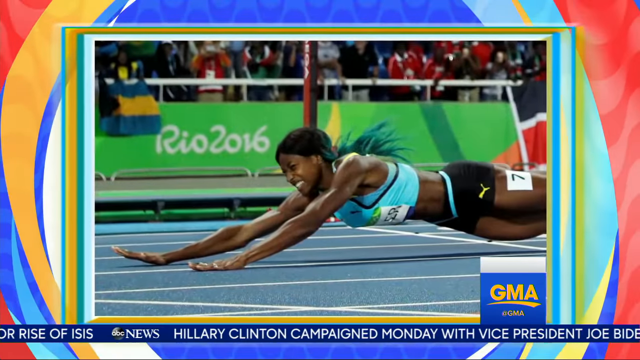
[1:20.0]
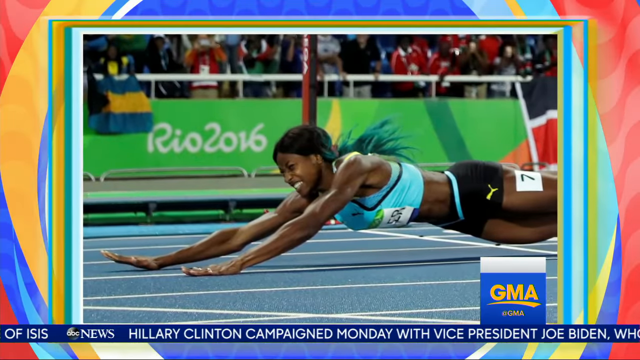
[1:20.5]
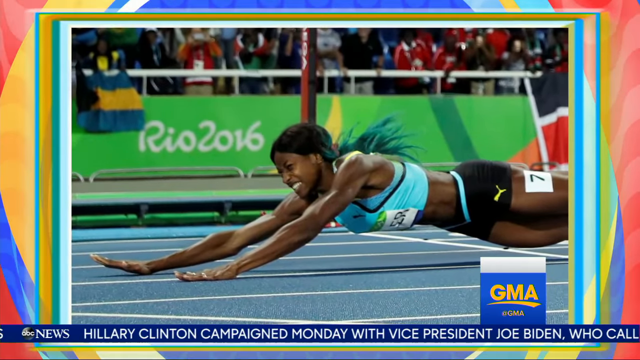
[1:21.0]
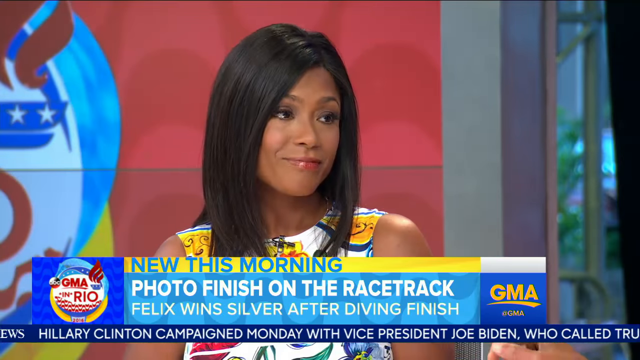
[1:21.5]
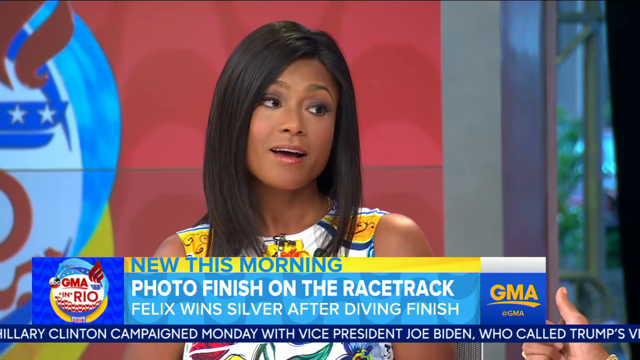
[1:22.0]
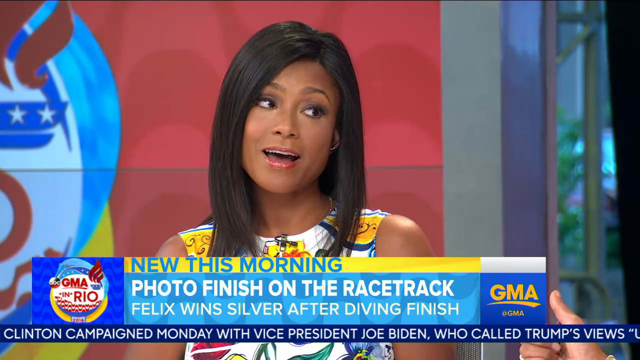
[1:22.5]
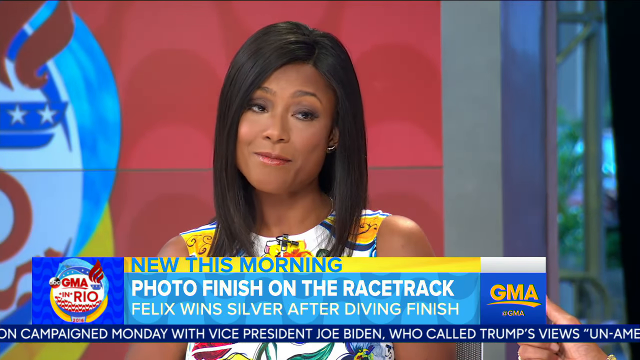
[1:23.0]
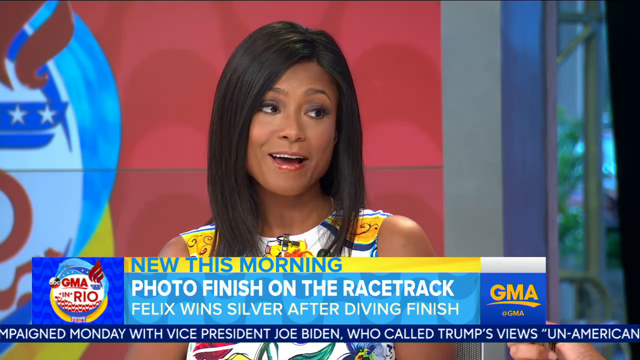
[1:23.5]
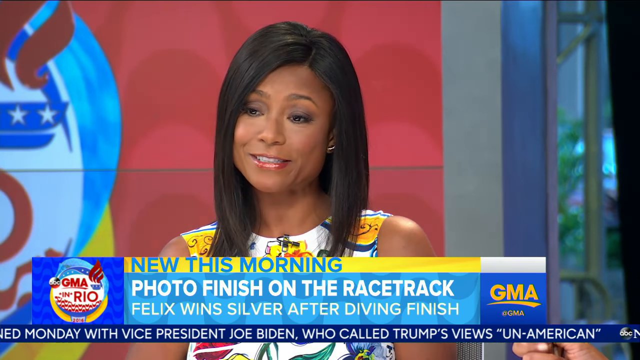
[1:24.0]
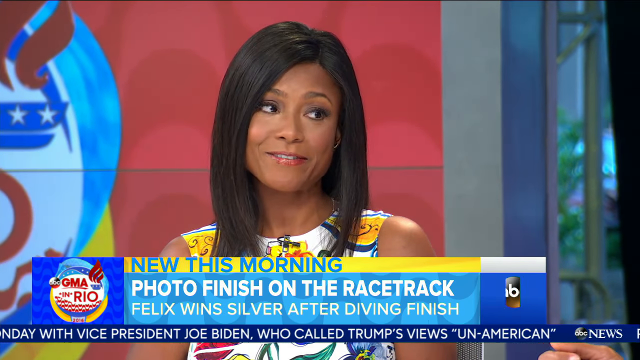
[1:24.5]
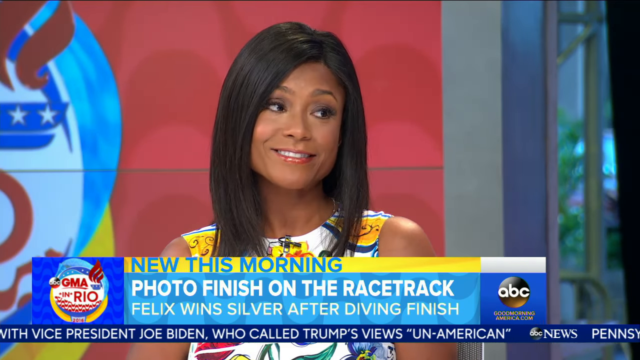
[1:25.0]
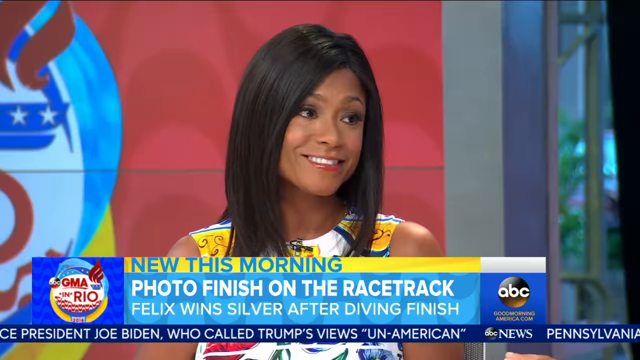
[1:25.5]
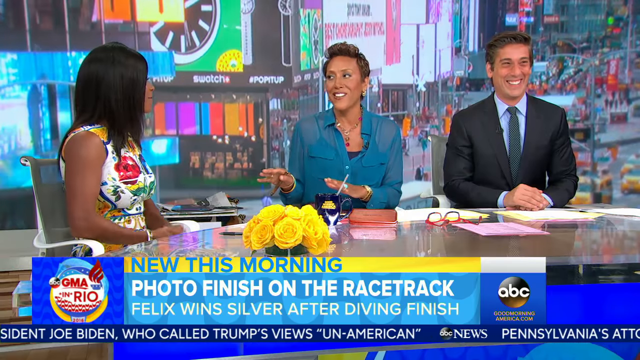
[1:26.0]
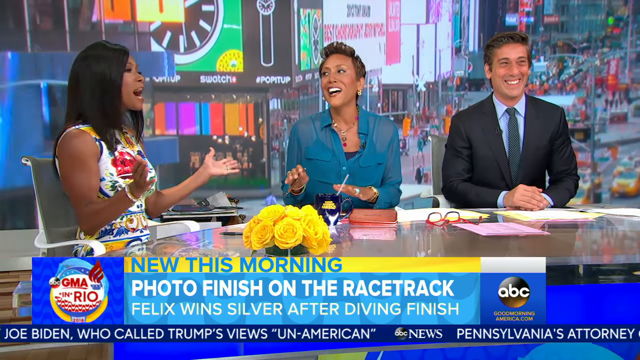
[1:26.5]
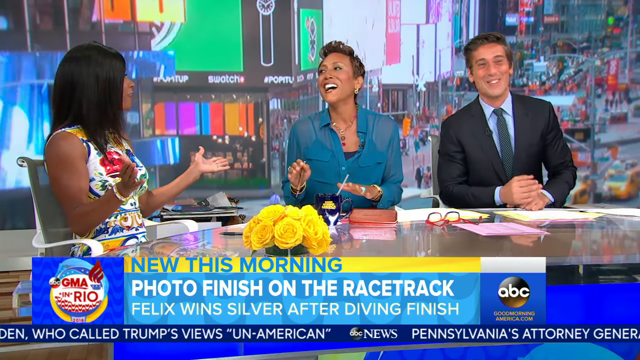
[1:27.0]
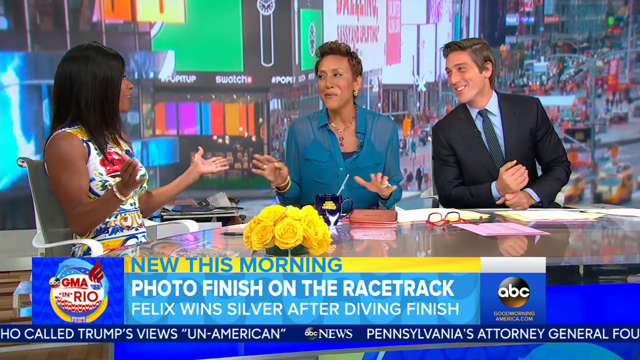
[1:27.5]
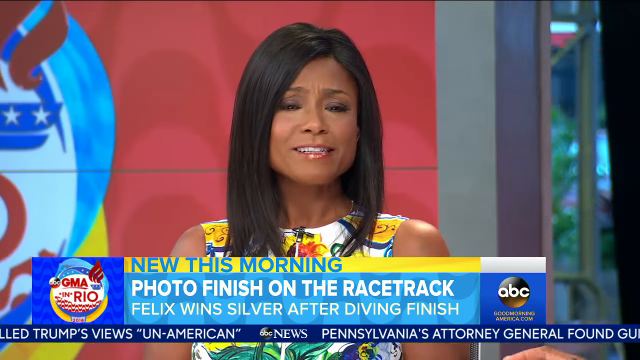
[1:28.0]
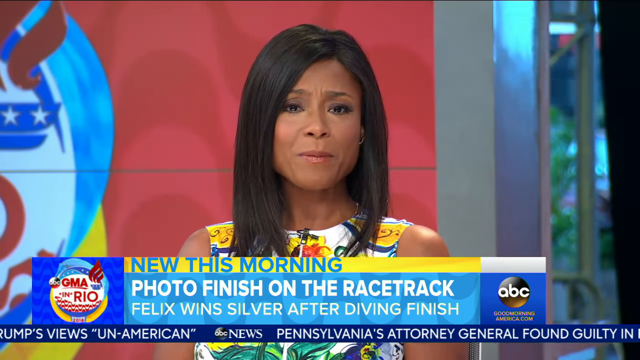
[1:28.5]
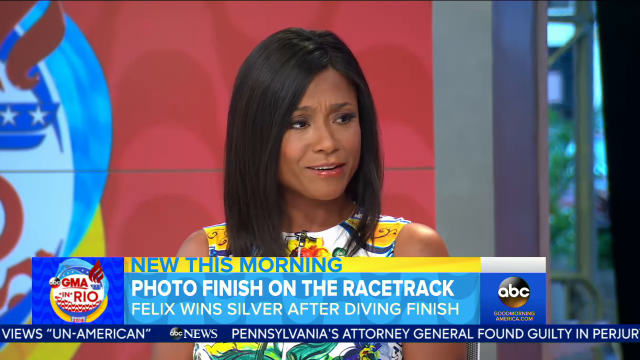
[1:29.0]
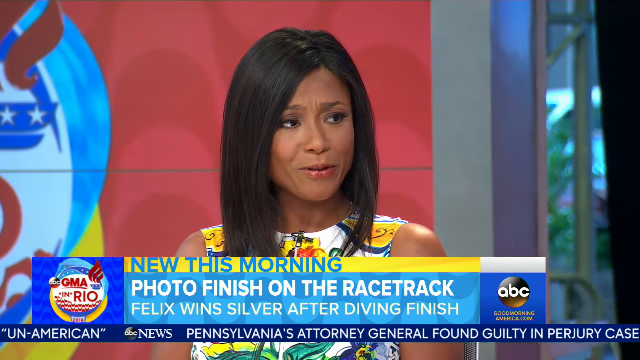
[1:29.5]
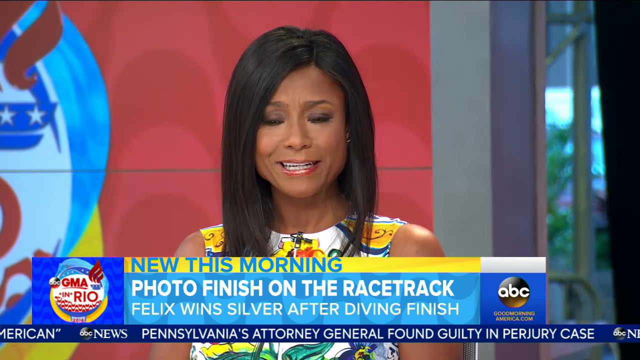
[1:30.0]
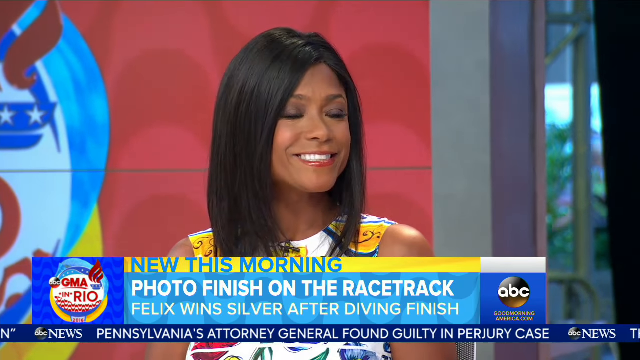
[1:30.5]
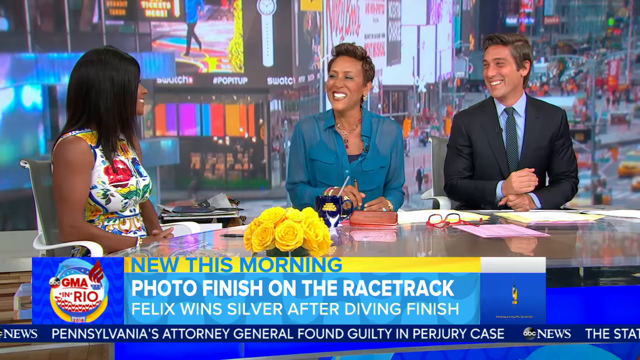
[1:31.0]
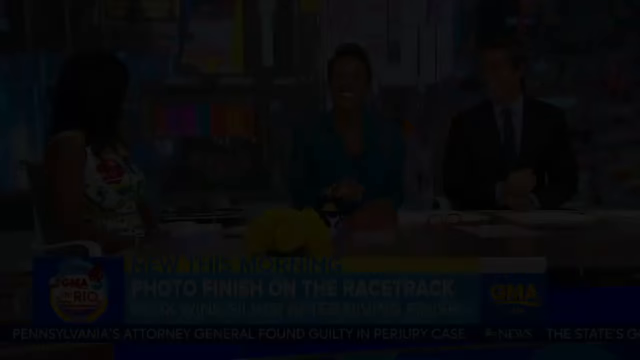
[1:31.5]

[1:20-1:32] At the Rio 2016 Olympics track and field event, a picture shows the woman falling; it looks very painful. She is about to hit the ground, with her hands already on it. She wears black tight shorts with a patch on her left leg showing the number seven and a turquoise tank top, and part of her hair is dyed turquoise. The video switches to Robin Roberts and the other woman in conversation. Then a man named David appears, wearing a suit, laughing, with his hands crossed; Robin Roberts laughs as they all converse.